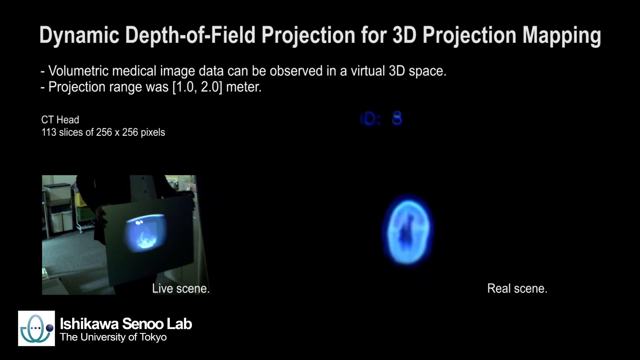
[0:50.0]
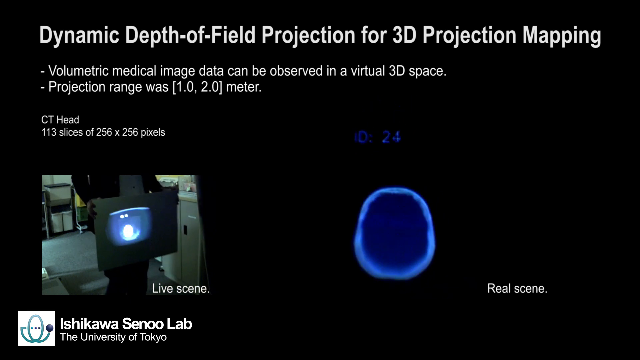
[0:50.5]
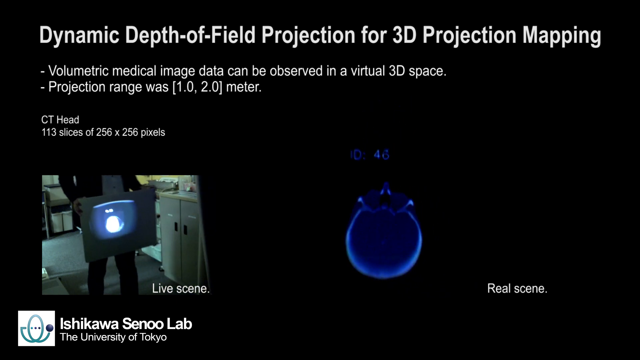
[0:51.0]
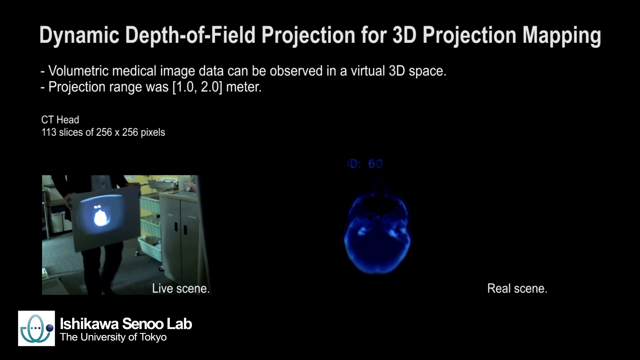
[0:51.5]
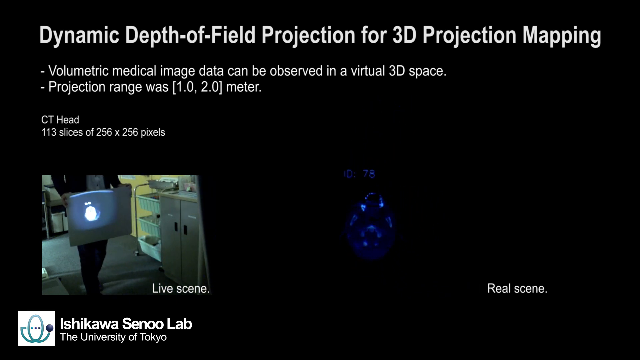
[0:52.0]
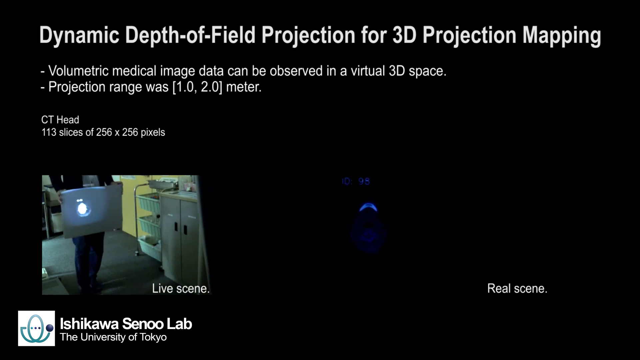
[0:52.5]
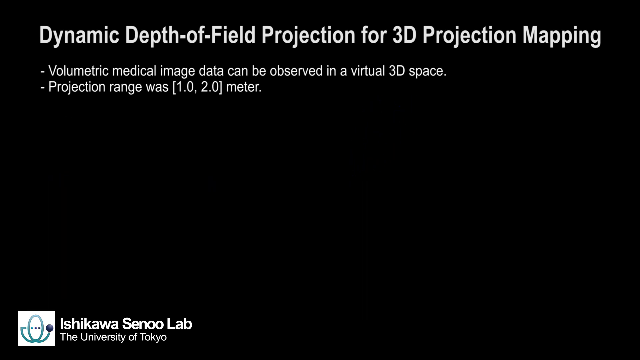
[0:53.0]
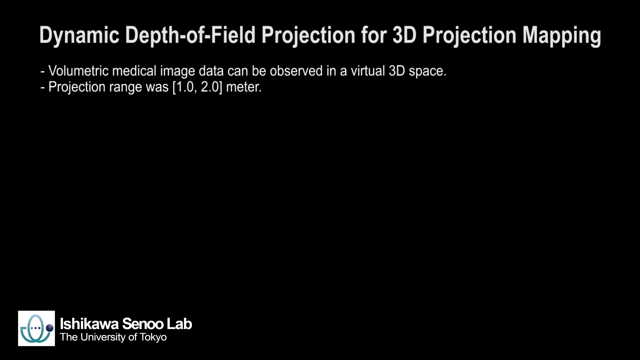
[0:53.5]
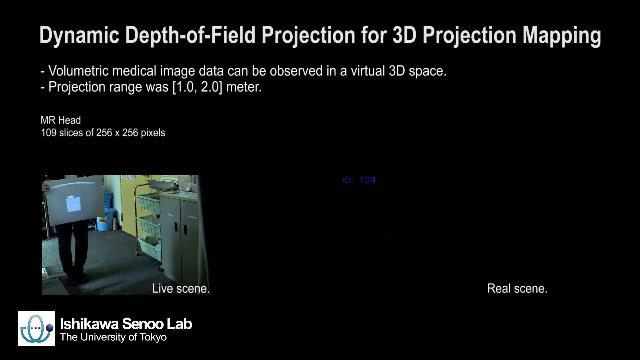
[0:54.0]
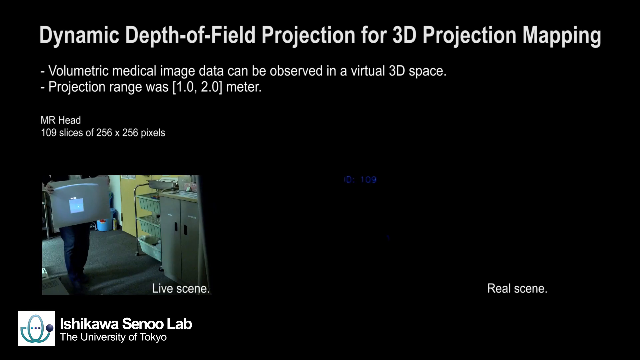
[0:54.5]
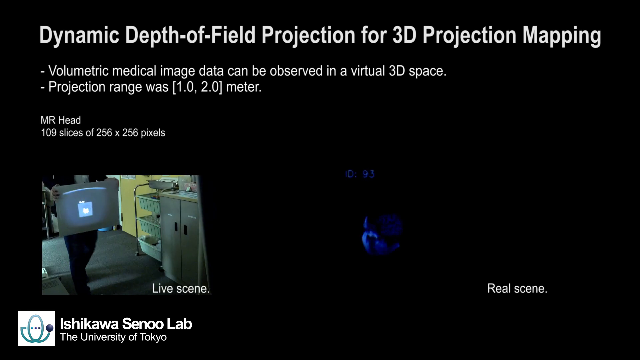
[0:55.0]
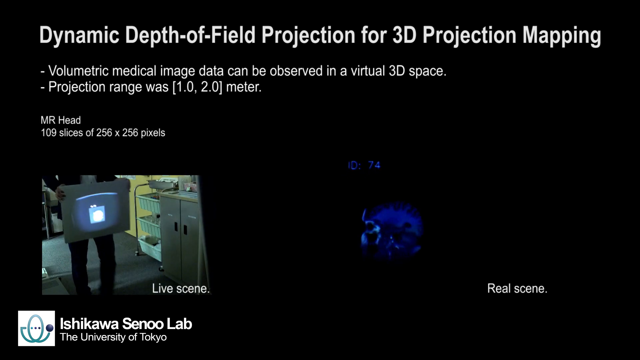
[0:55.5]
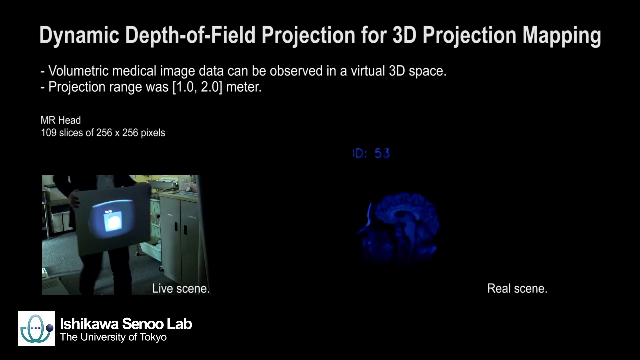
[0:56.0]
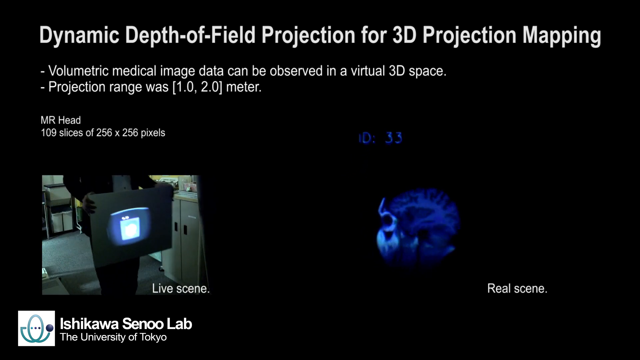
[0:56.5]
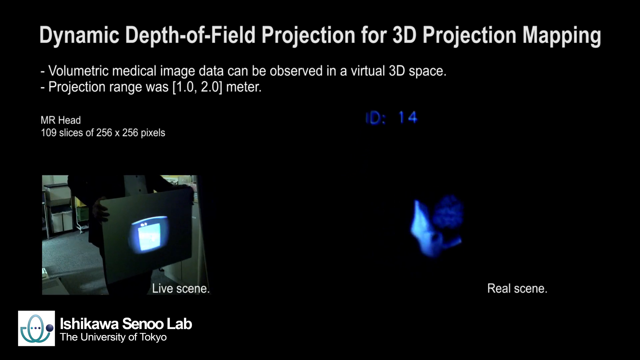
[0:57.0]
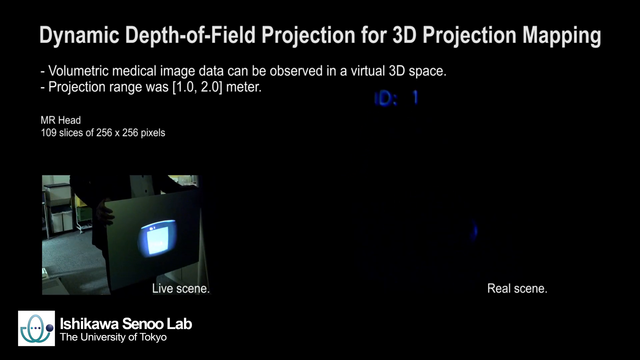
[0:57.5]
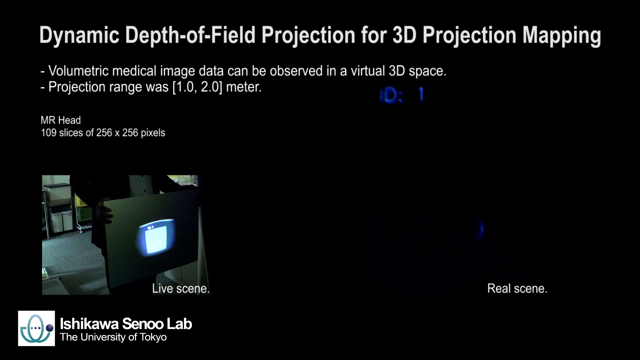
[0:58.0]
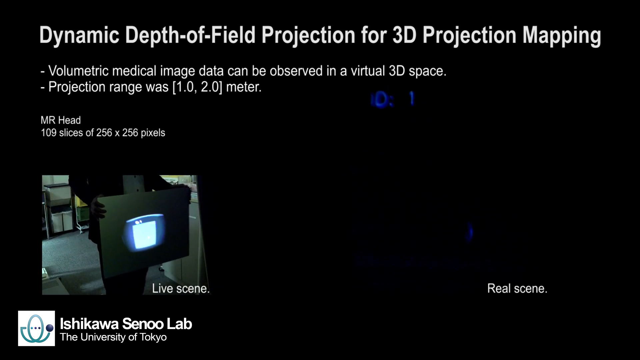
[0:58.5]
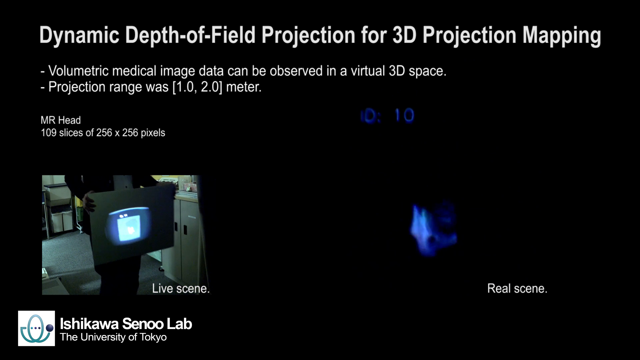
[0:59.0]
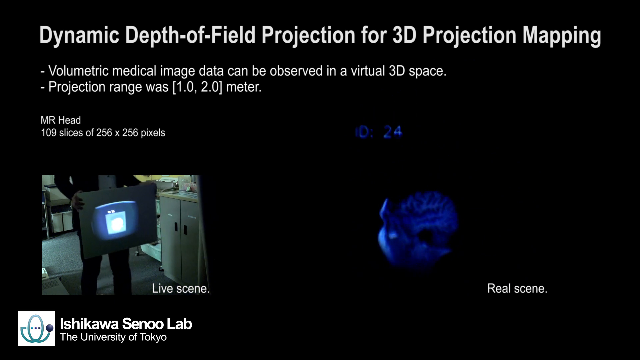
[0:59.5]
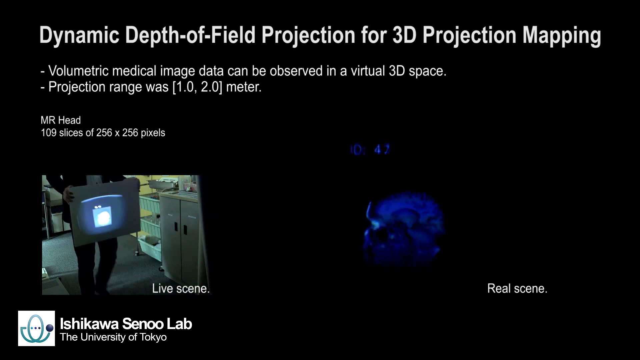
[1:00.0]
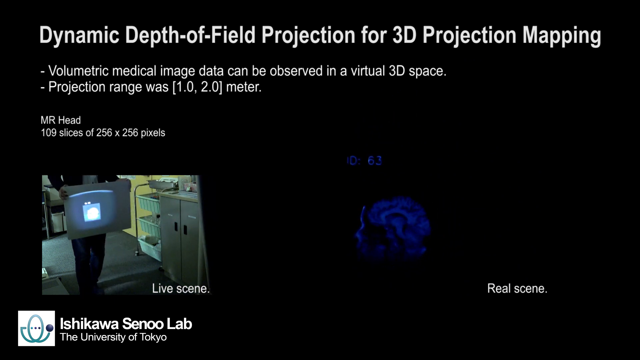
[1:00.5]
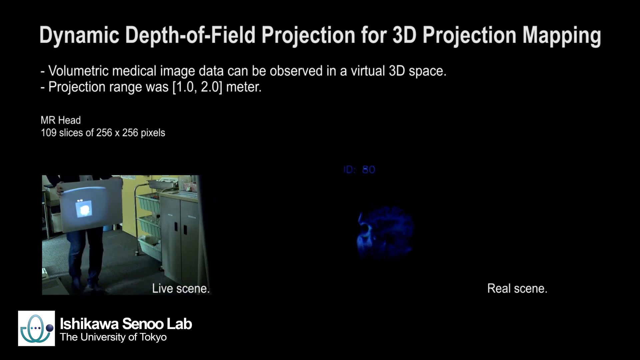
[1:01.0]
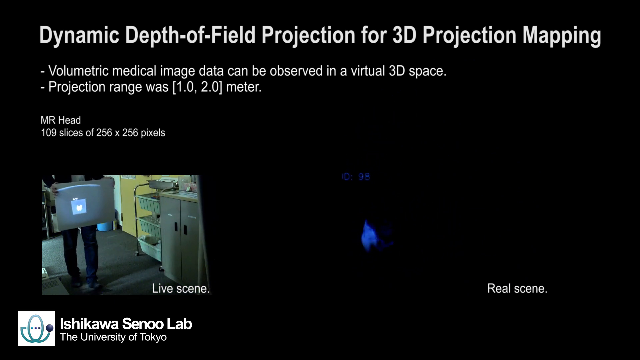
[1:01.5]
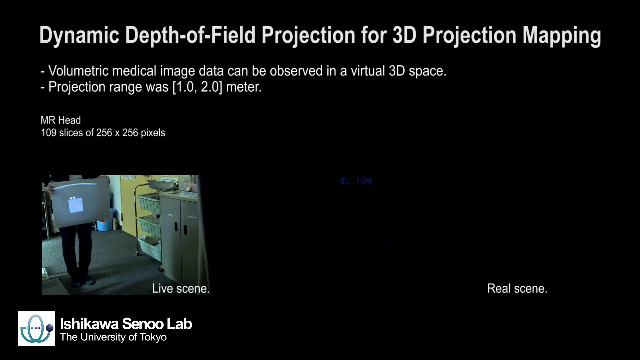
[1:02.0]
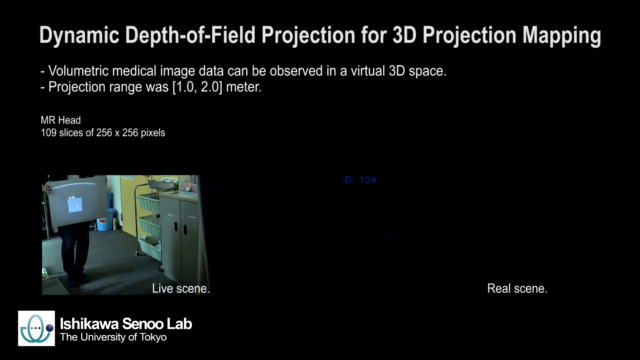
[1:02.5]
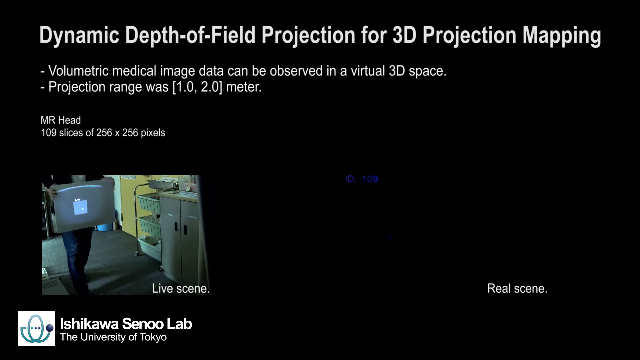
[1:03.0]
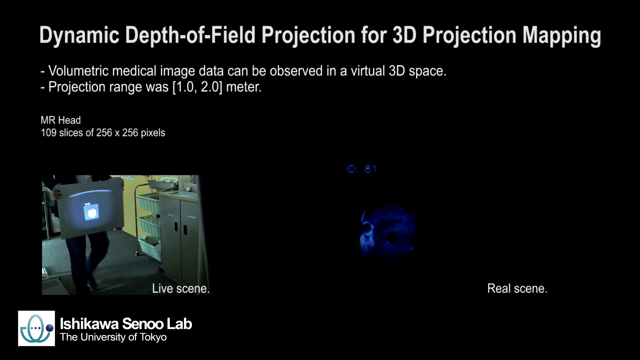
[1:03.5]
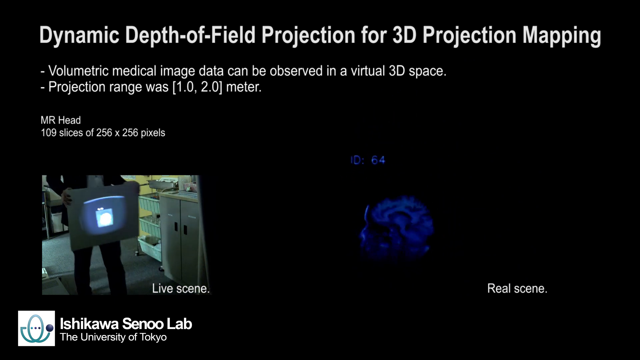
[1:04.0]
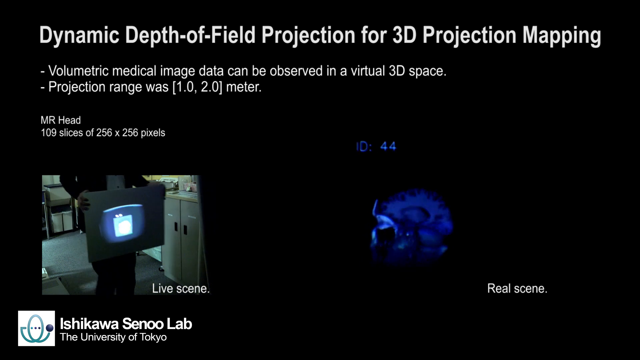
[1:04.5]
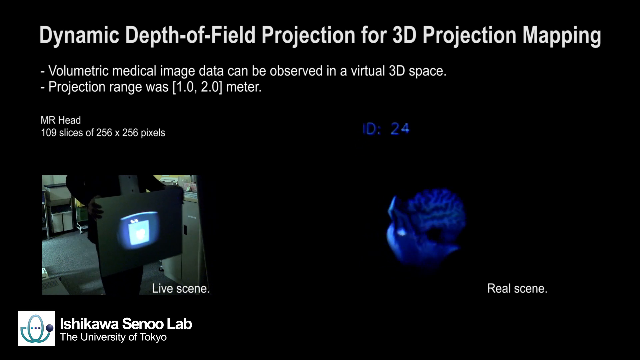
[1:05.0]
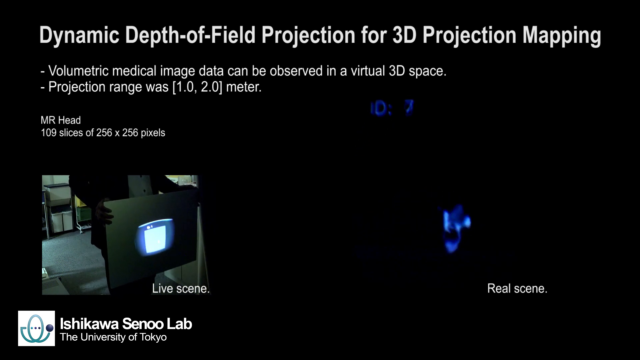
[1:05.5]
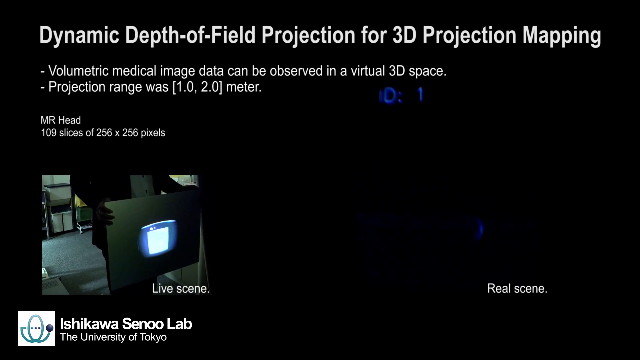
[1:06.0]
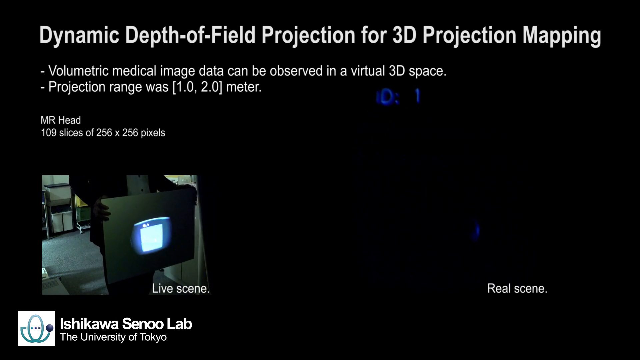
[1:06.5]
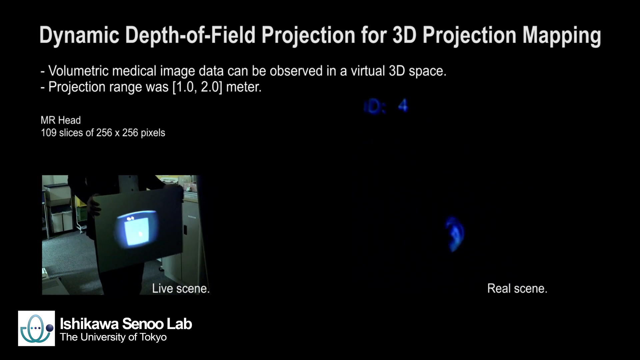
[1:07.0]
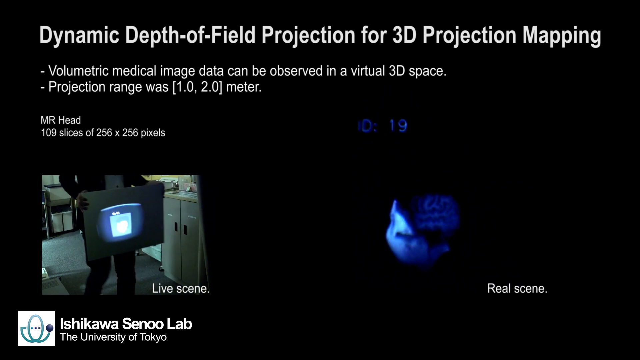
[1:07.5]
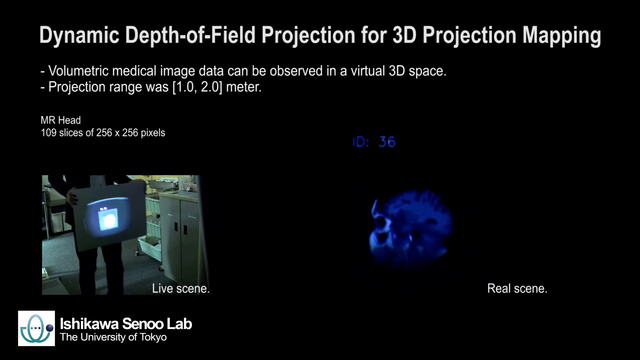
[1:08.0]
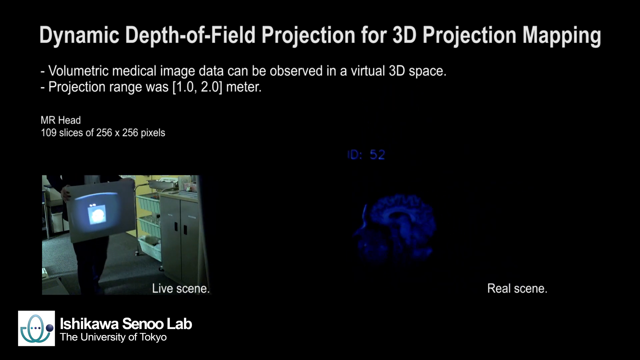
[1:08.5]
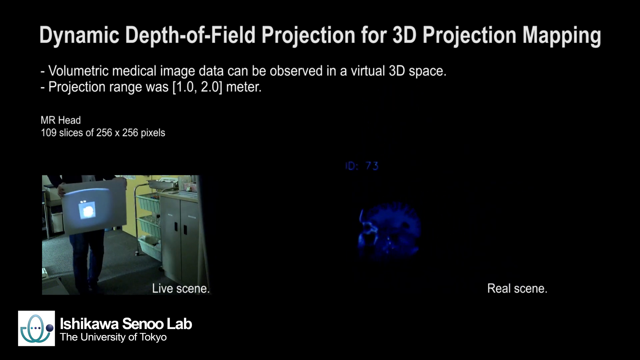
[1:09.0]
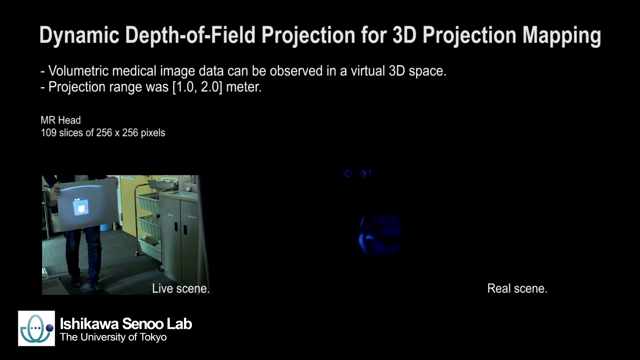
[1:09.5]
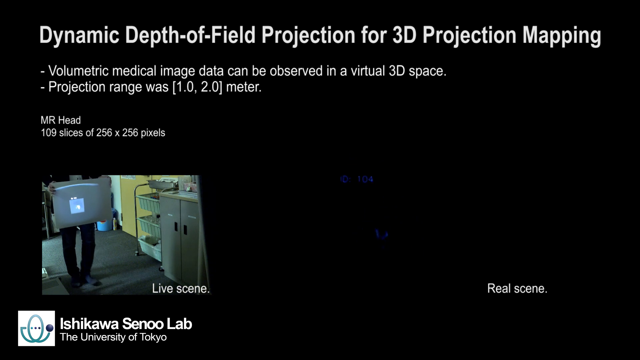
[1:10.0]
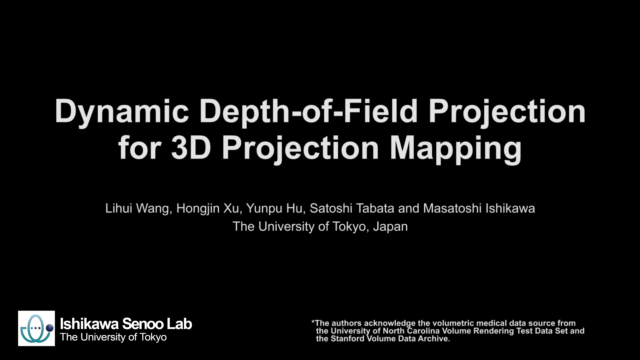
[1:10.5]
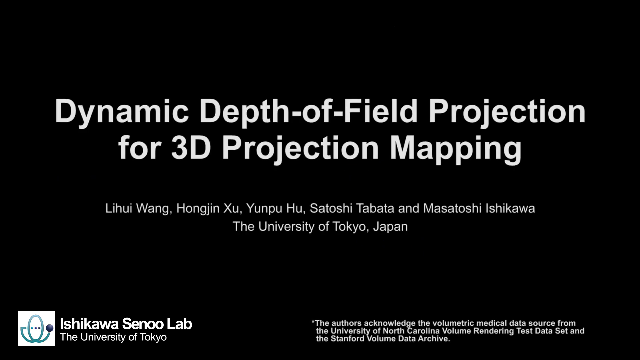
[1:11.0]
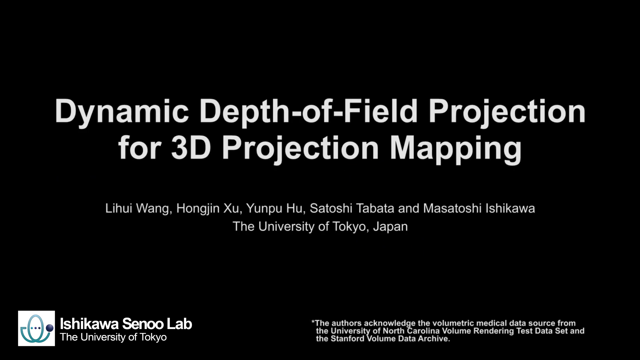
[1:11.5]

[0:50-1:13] Against a black background, the top reads "Dynamic Depth of Field Projection for 3D Project Mapping," with more details about mapping underneath. Below that are two images. One shows a man walking forward with a piece of paper that has some kind of glowing image on it. To the right is a blue, glow-in-the-dark kind of image that goes in and out of the black background. After a few seconds, another screen appears with a black background and large letters that say "dynamic depth of field prediction for 3D project mapping." It gives credits to multiple people whose names look to be Japanese, and "University of Tokyo, Japan" appears underneath all the names.